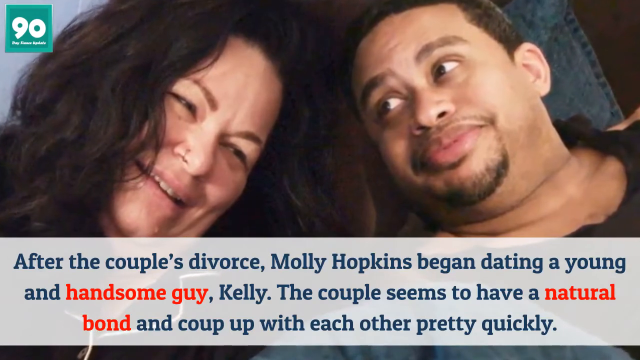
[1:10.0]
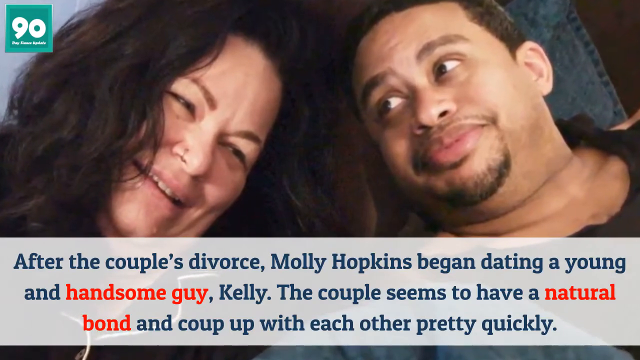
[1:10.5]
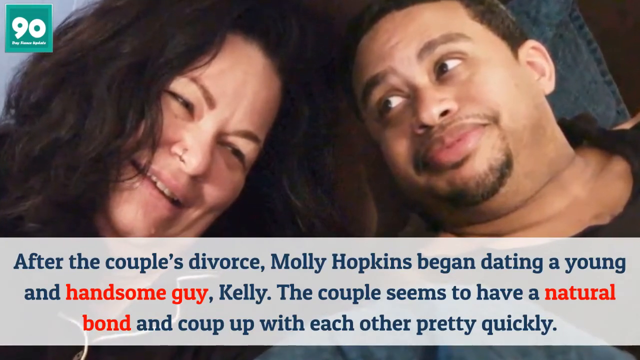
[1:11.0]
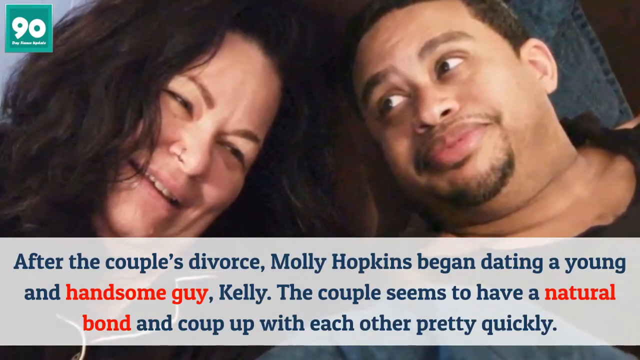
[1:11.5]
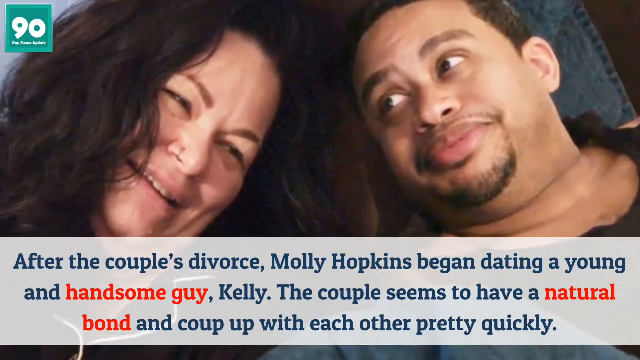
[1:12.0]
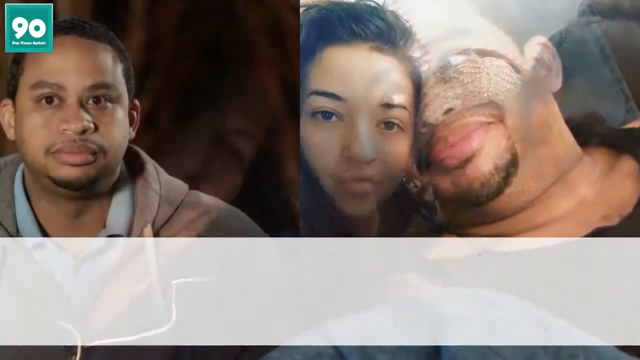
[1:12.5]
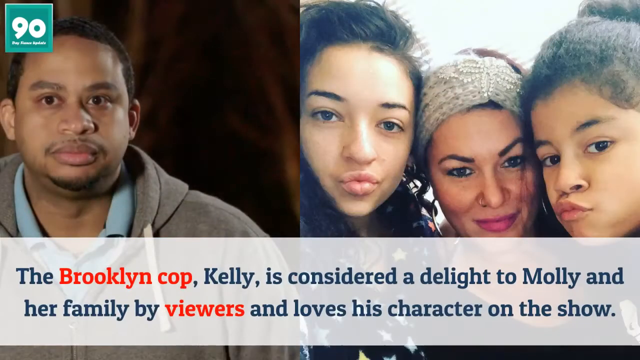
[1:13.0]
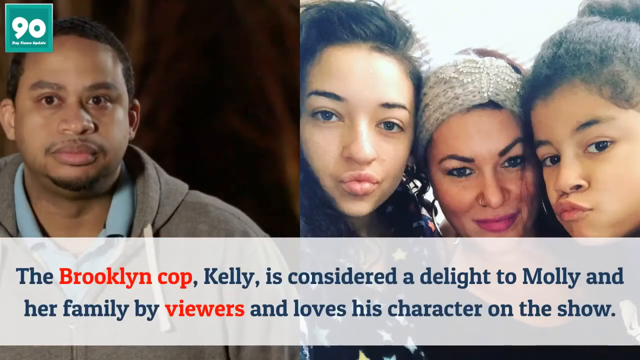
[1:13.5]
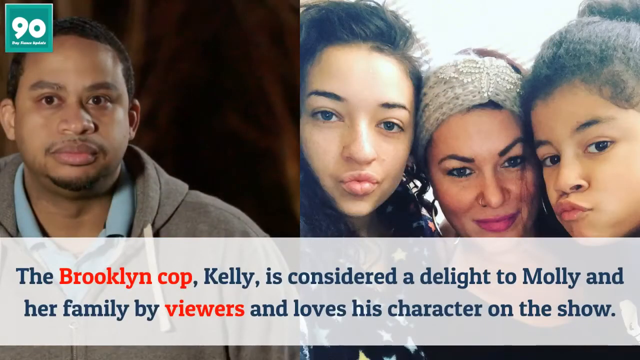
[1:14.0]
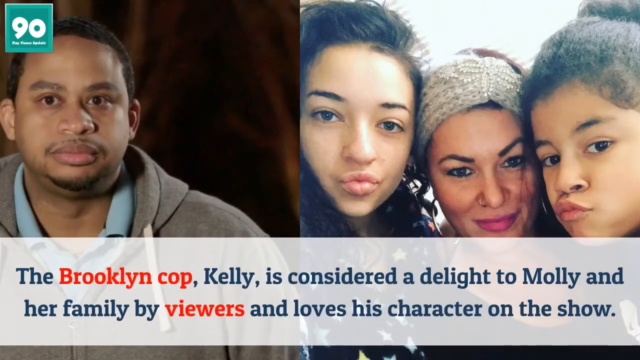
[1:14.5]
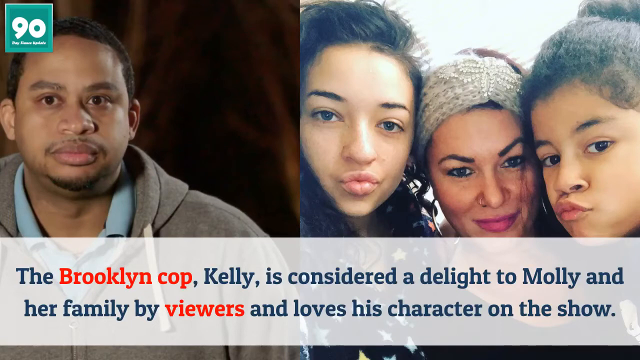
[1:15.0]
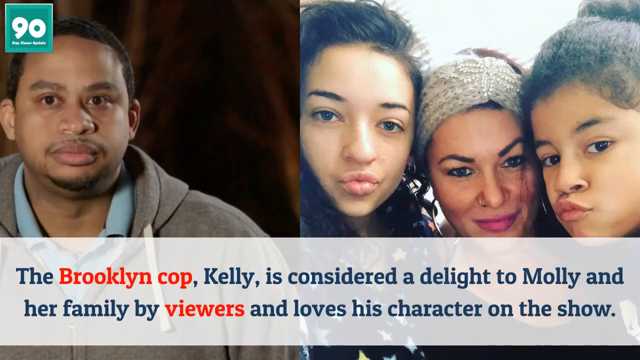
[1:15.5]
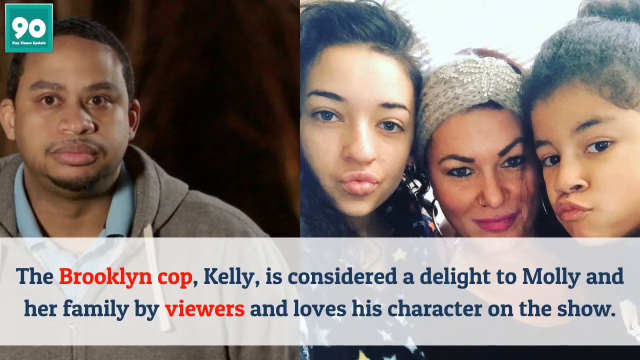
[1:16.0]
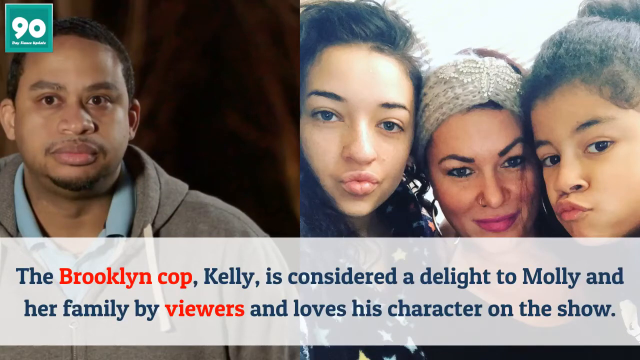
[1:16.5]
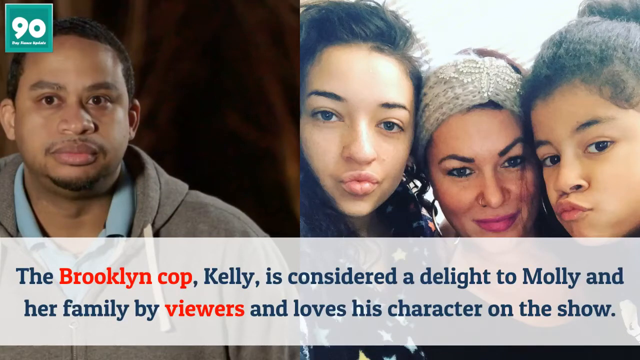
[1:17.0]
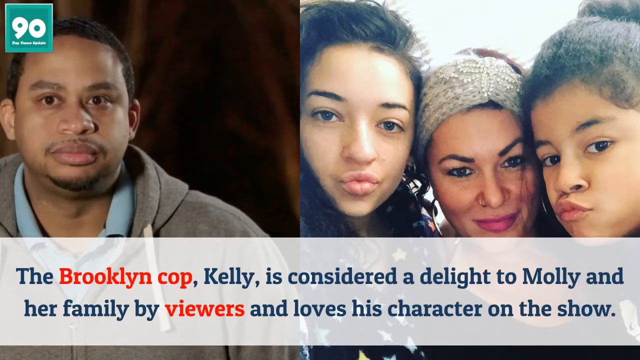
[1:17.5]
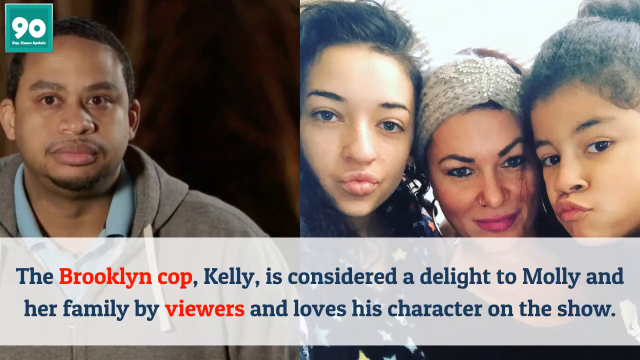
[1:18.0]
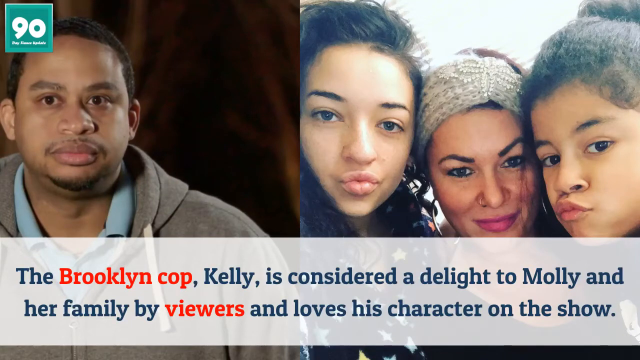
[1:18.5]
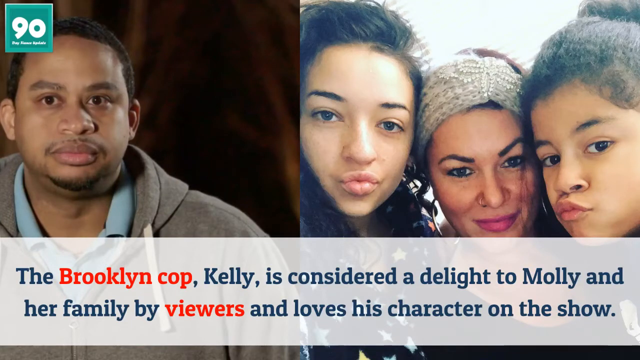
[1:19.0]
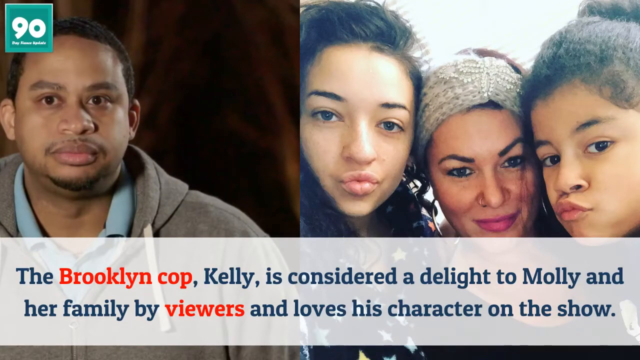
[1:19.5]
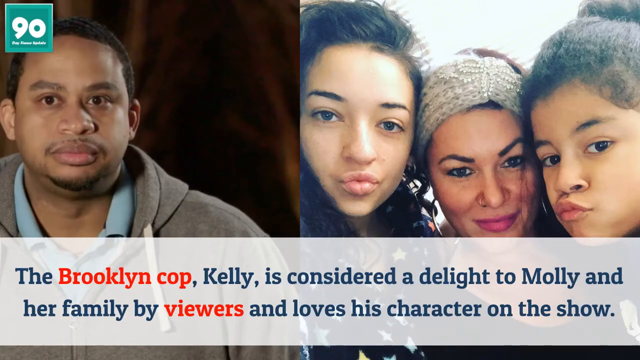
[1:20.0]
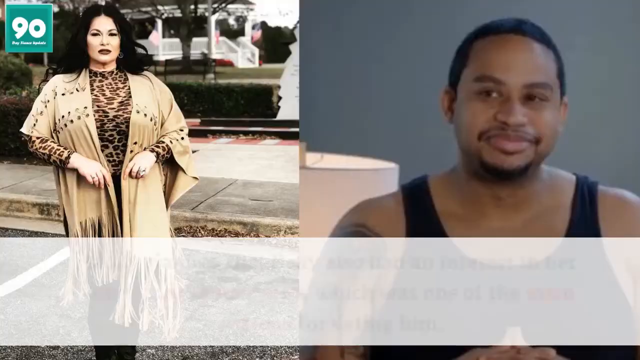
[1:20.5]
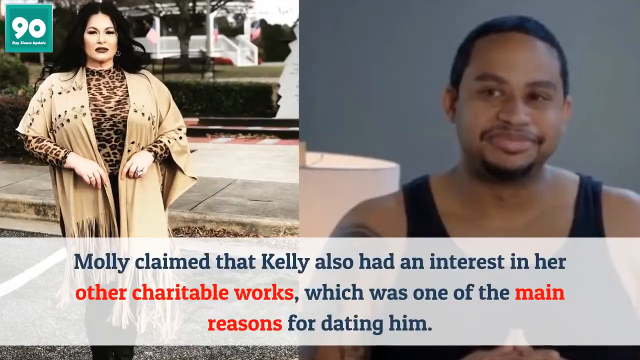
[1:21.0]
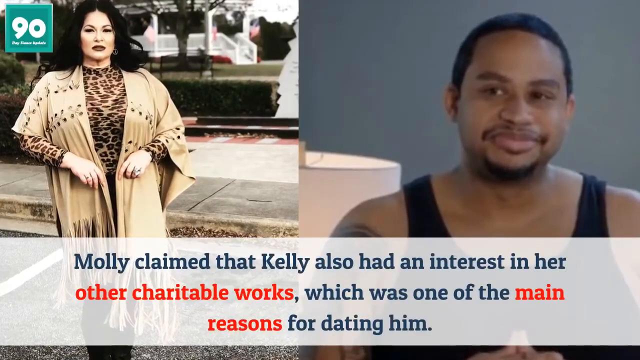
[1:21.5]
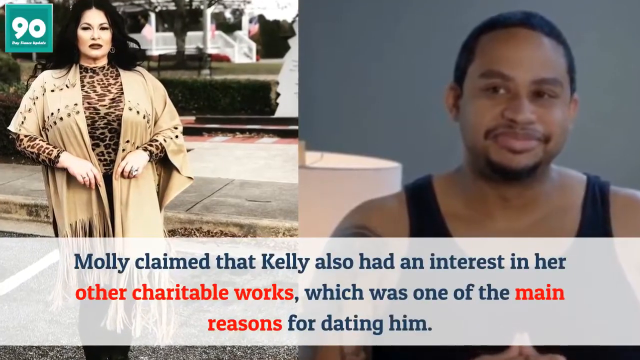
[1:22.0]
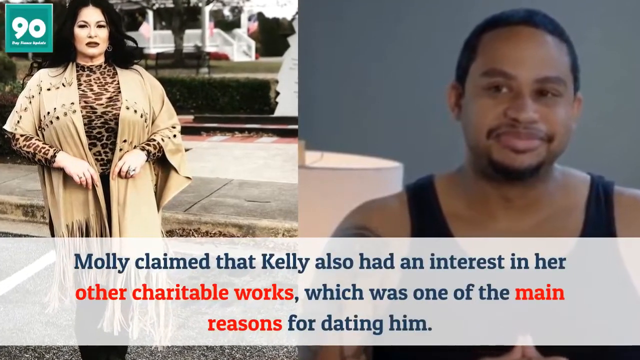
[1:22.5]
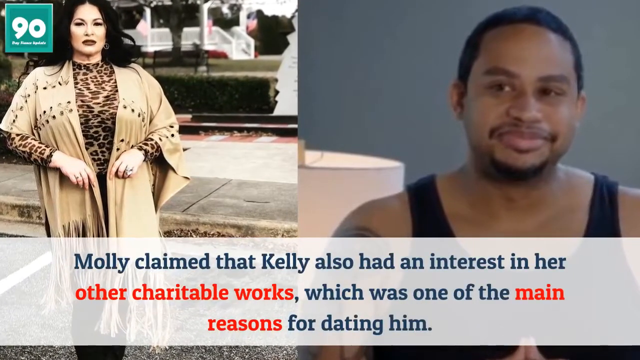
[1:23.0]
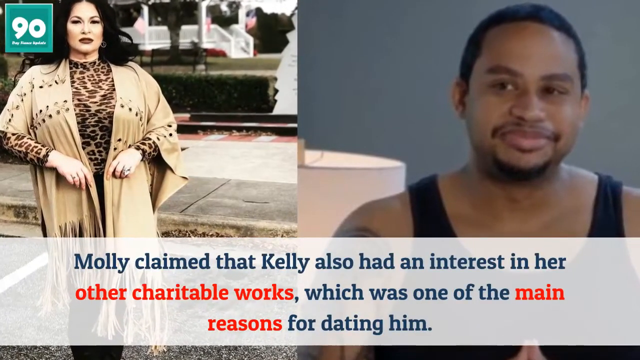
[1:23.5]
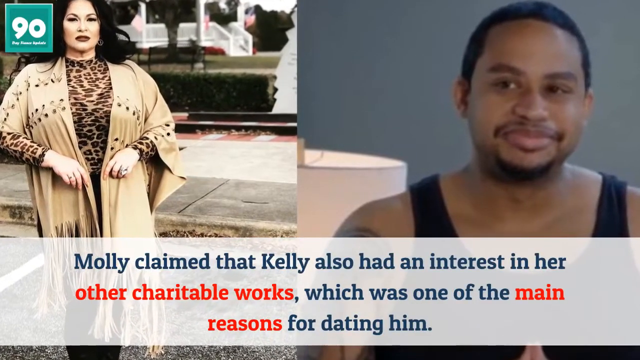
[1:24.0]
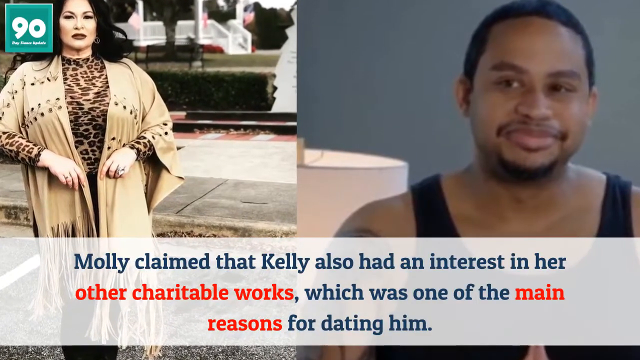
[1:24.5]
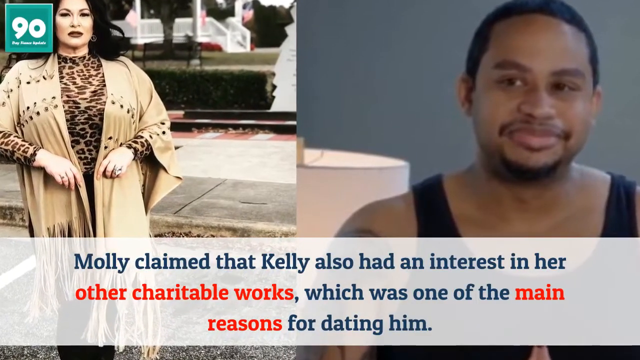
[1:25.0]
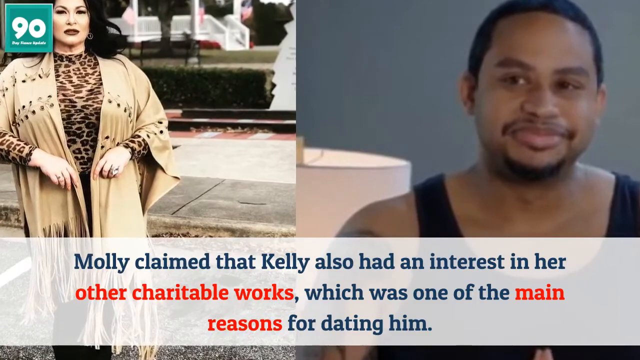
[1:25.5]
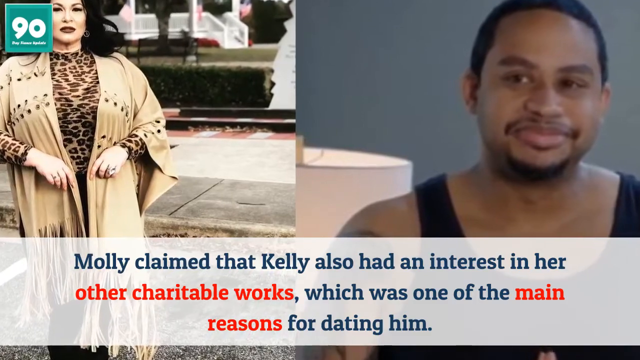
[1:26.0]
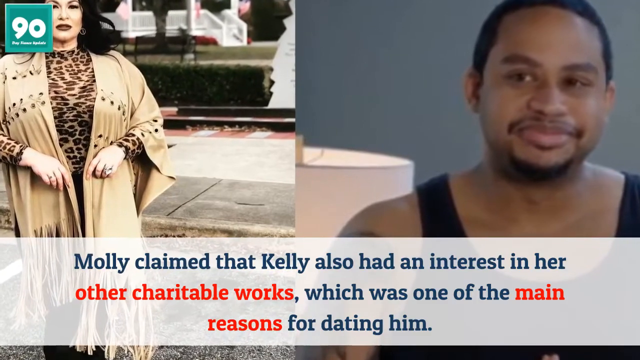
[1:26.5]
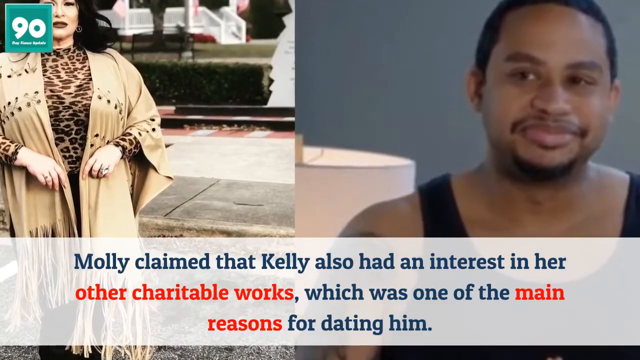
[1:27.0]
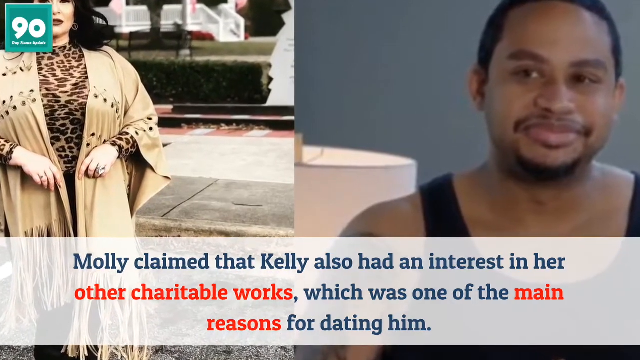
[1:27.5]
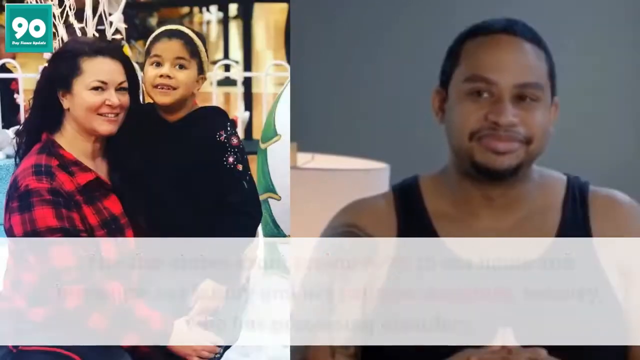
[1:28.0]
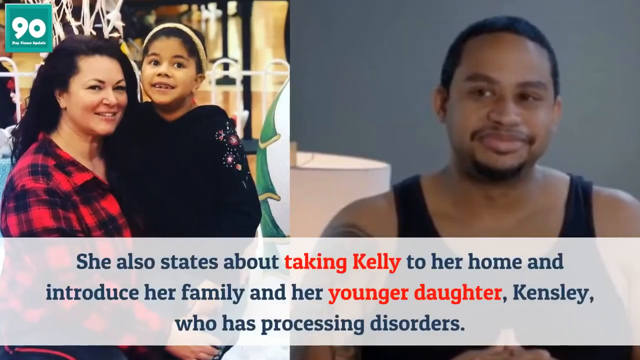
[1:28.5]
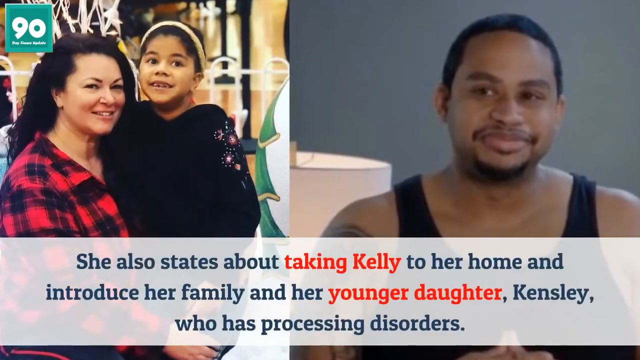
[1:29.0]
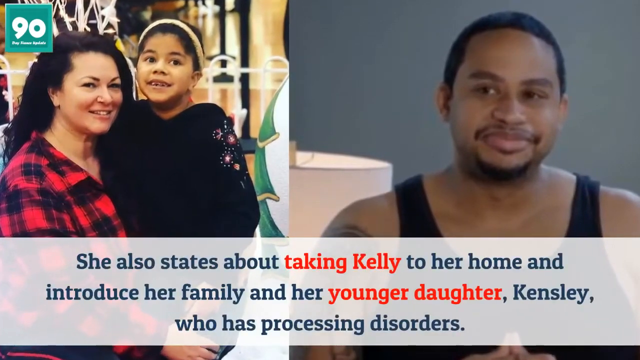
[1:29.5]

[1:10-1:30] A still image shows a couple who appear to be laying on the floor, their heads almost touching. The woman is on the left side and the man on the right. The woman appears to have messy, long, black hair and appears to be laughing. The man wears a white beater and makes a goofy expression while looking at the woman. At the bottom of the image is a white, transparent banner with a caption that reads "After the couple's divorce, Molly Hopkins began dating a young and handsome guy, Kelly. The couple seems to have a natural bond." The scene then transitions to two more images, a man on the left side and three women on the right, with another white banner with captions at the bottom.